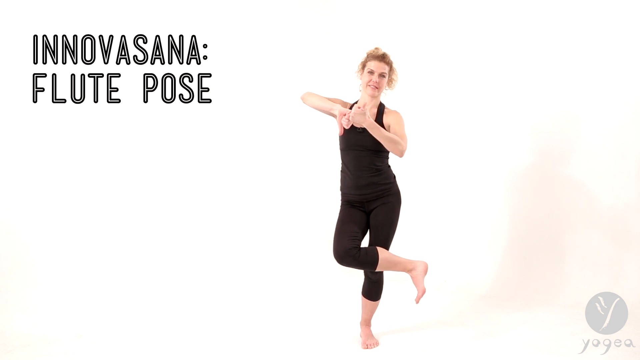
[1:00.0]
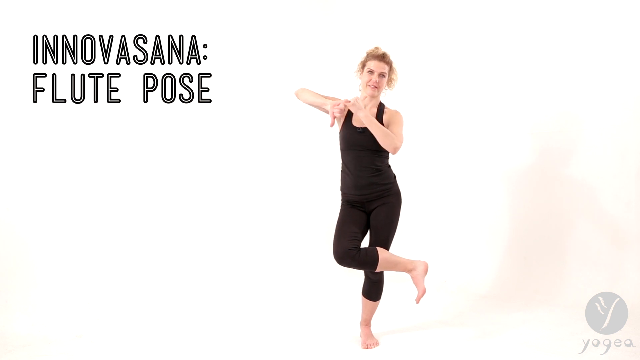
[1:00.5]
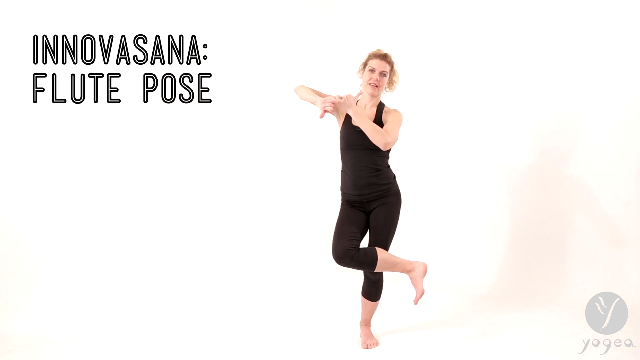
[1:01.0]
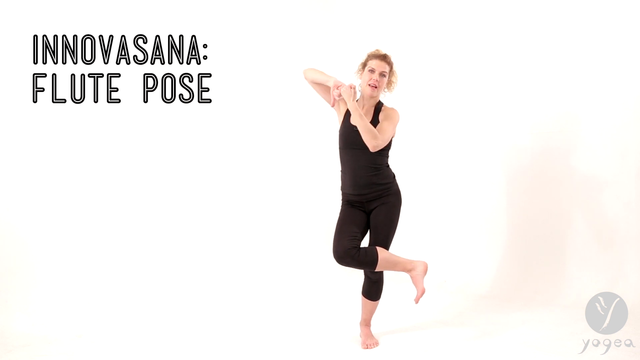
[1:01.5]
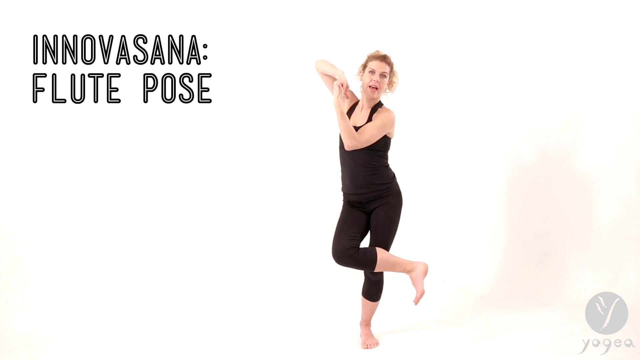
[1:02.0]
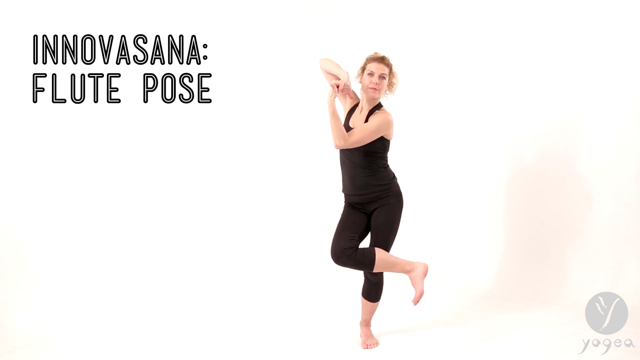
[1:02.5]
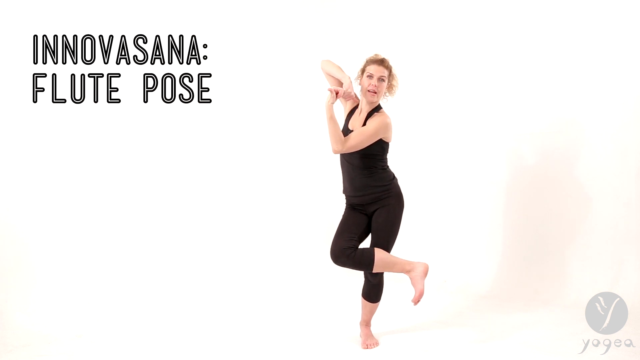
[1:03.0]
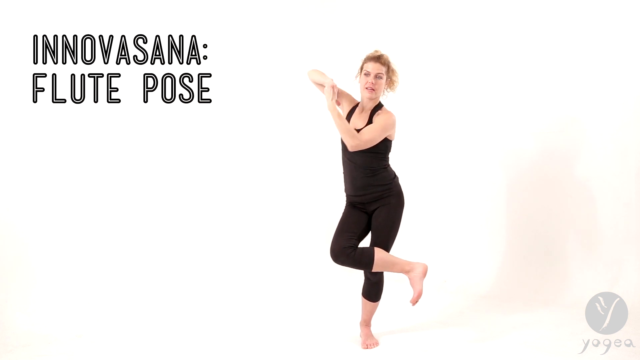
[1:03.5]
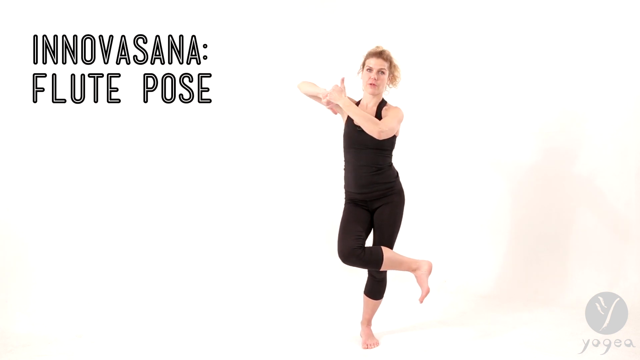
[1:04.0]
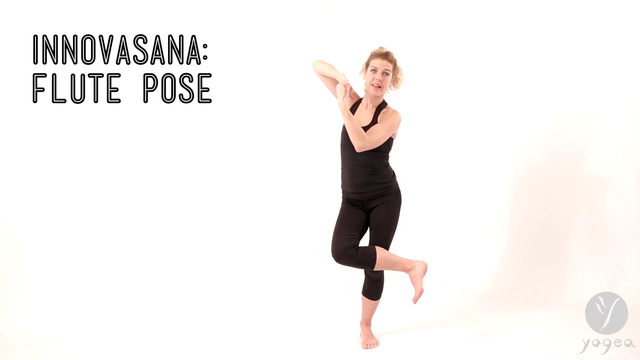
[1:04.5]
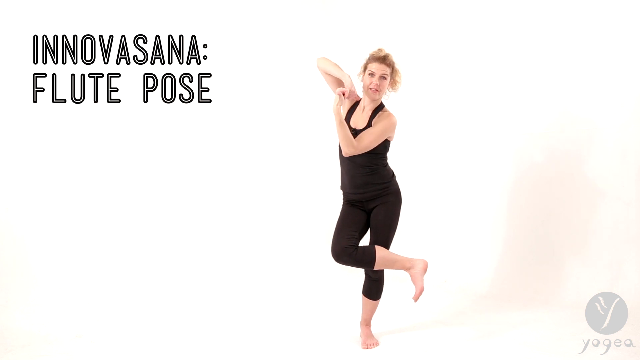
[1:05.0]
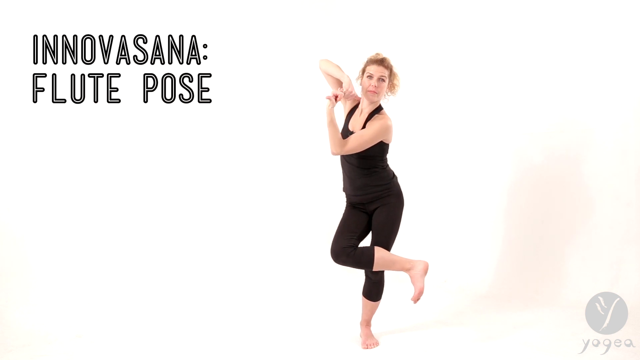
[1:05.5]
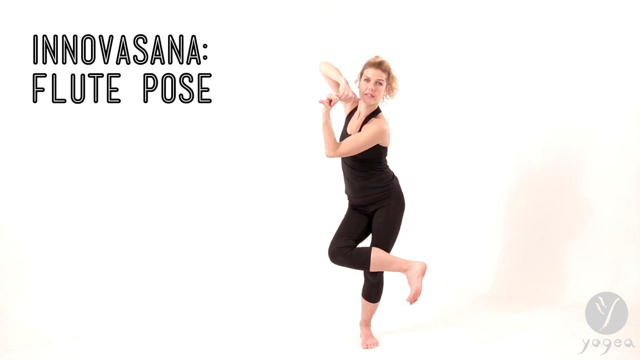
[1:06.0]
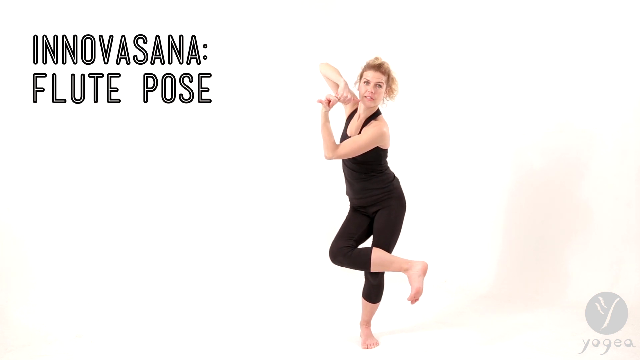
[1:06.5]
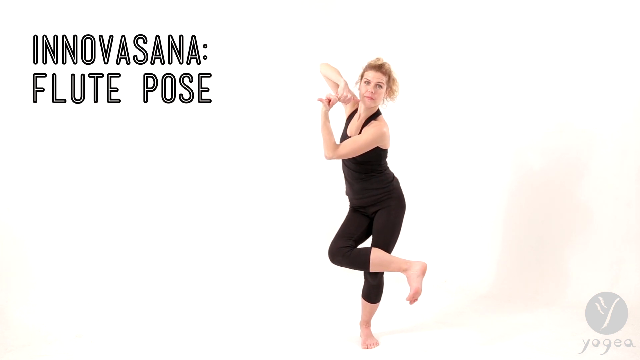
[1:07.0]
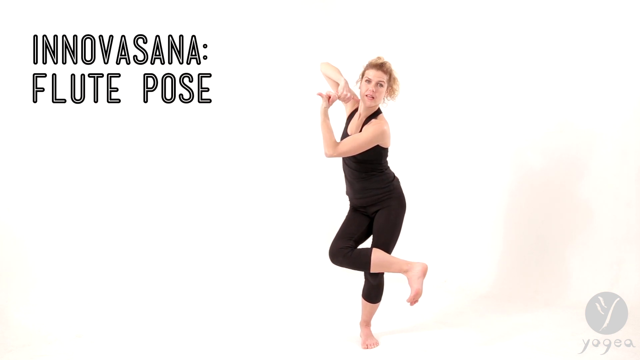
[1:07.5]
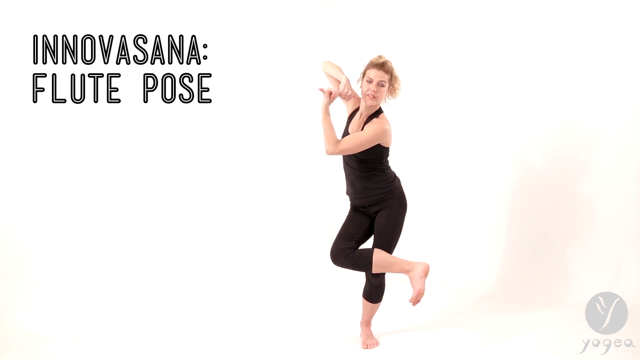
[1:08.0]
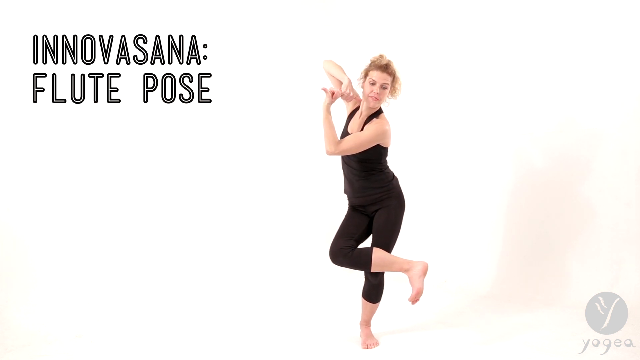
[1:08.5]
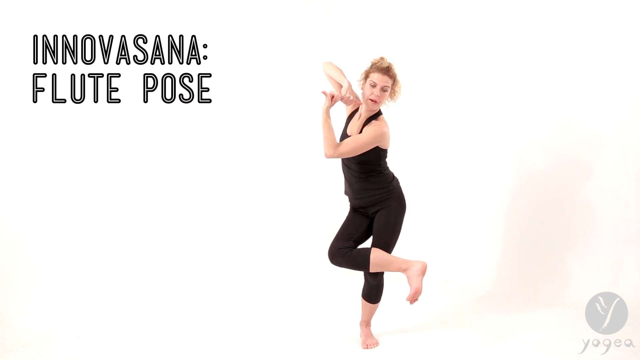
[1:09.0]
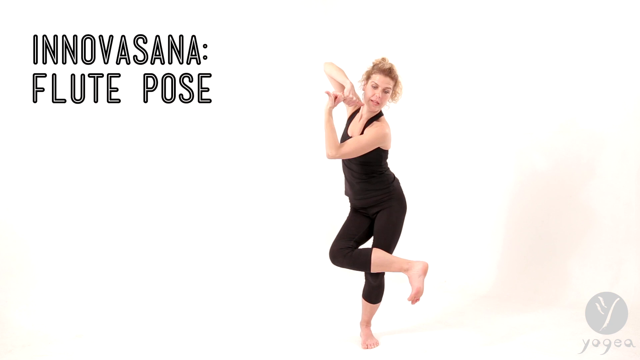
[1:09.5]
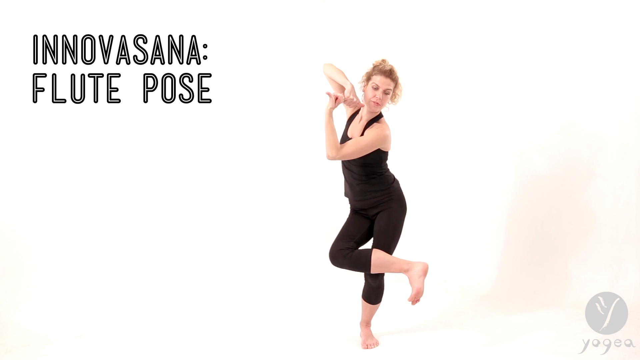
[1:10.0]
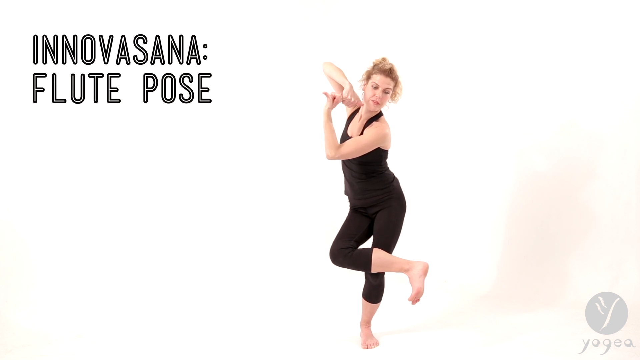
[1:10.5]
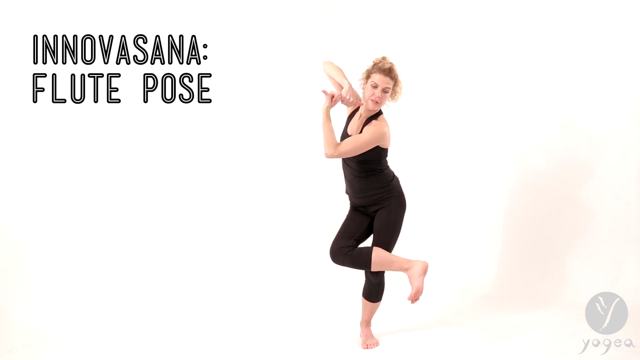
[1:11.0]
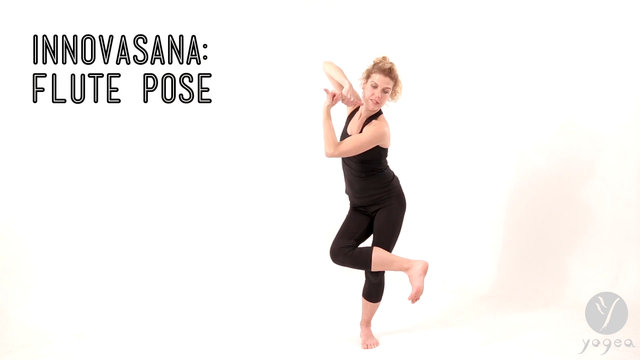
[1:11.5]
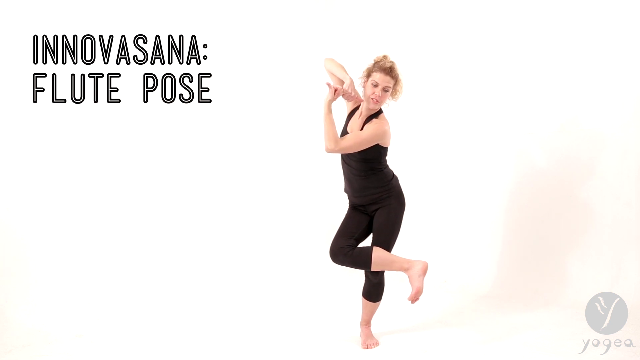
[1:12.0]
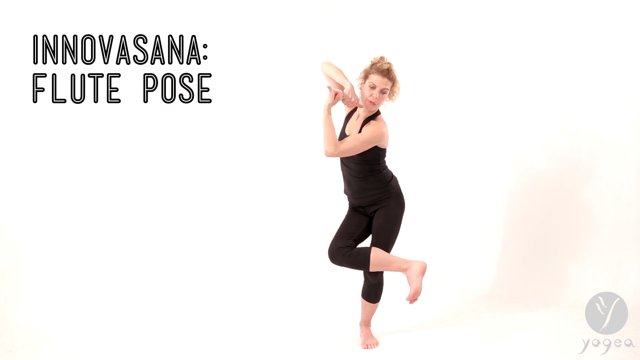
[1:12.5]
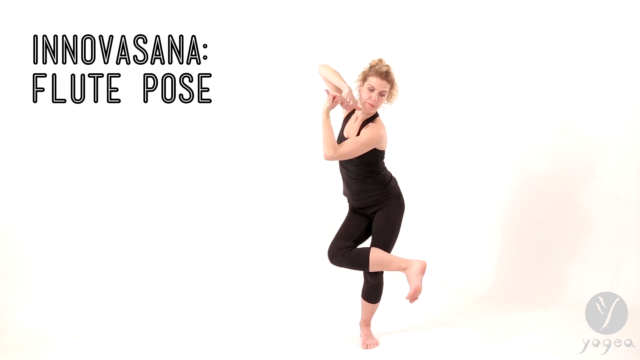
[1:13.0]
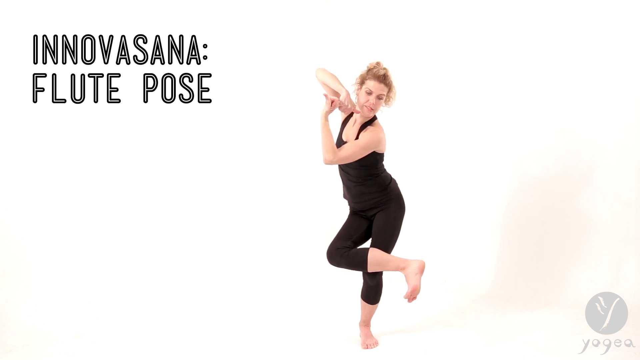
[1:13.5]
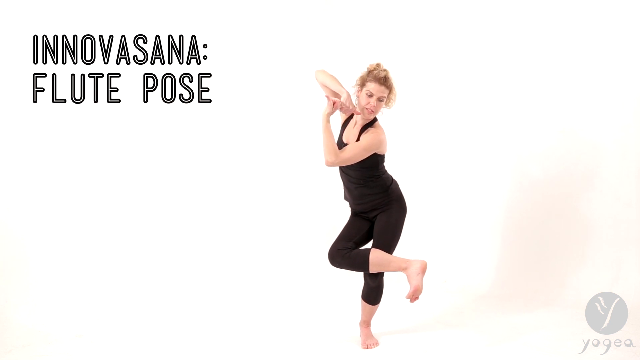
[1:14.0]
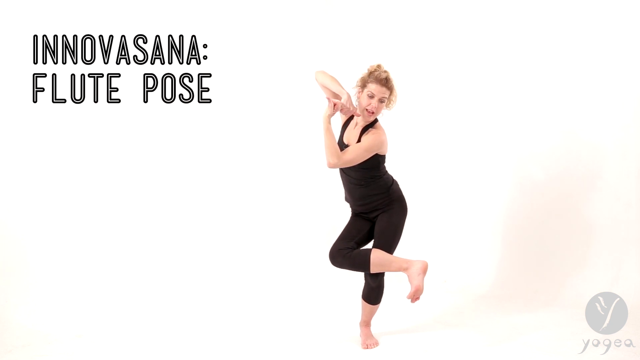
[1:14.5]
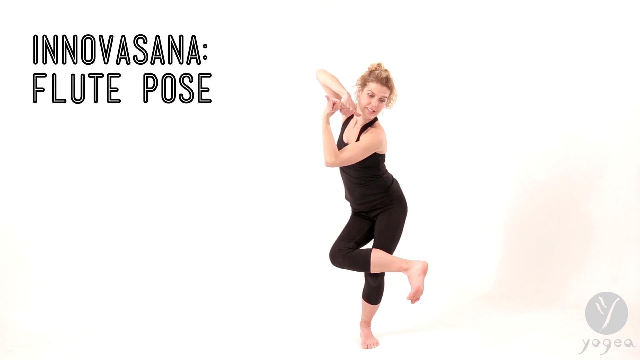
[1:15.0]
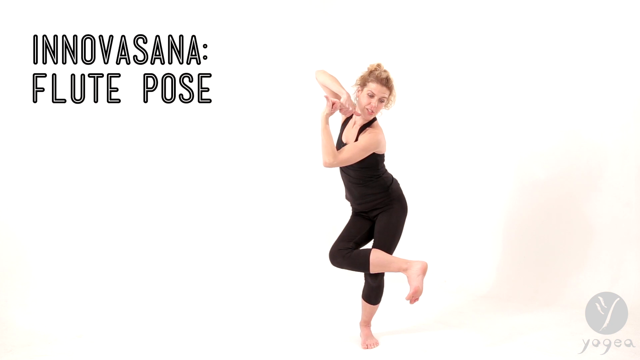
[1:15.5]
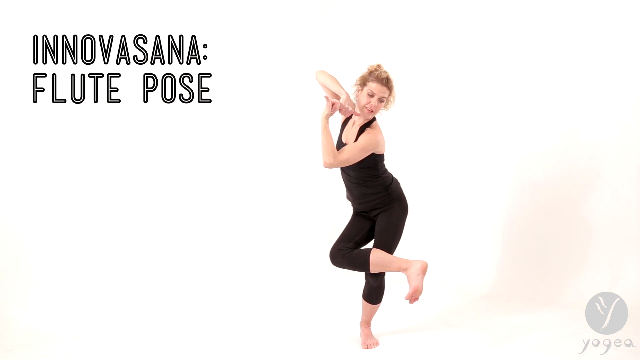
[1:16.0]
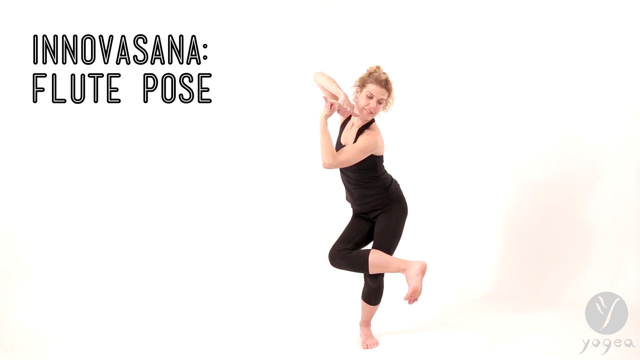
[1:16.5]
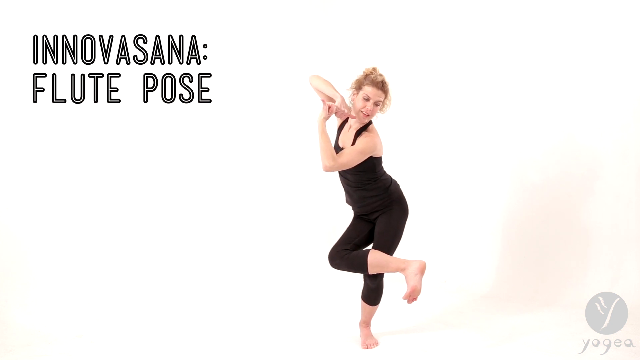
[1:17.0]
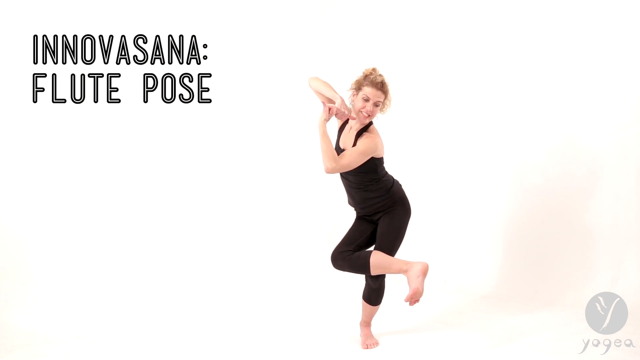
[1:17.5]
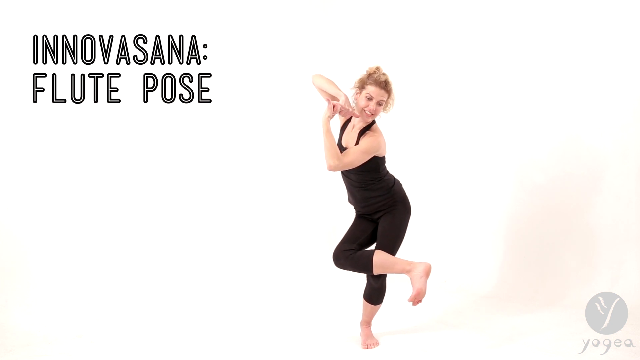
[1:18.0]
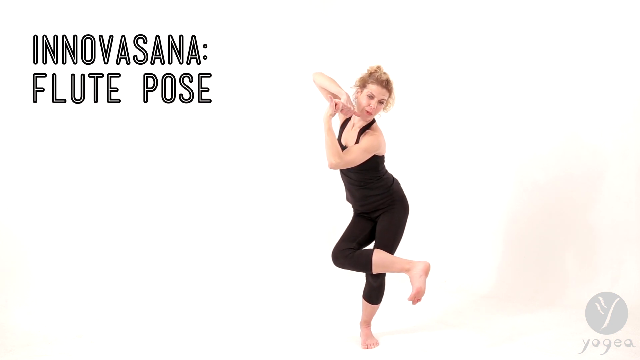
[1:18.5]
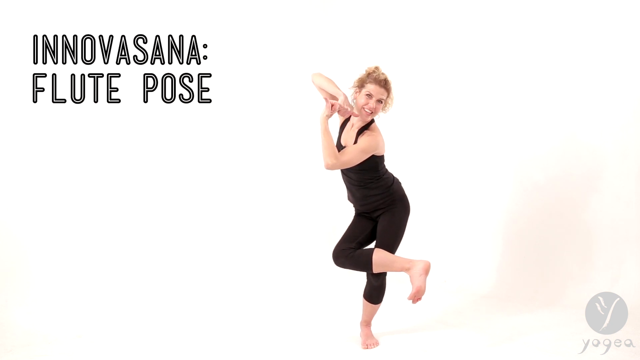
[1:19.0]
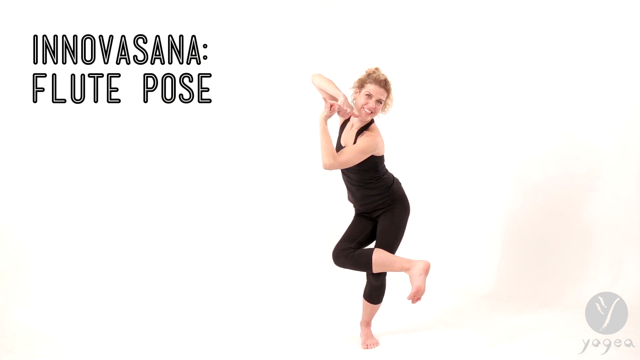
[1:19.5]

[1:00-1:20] In the completely white studio, the woman in the black leotard, who has blonde hair, stands with one foot on the ground and the other foot in the air, its knee bent and the leg crossed in front of the standing leg, in the yoga flute pose. She talks to the camera, moving her hands out to her sides and kind of clasping her fingers together as she slightly squats down on one leg. She gradually scrunches her body closer and closer to the floor while balancing on one leg, with the other leg lifted and crossed in front of it, apparently using her hands to help balance.